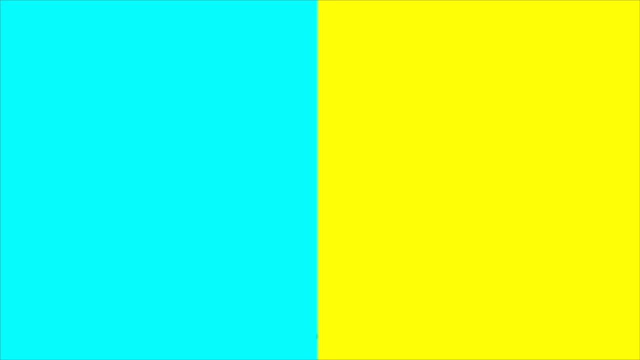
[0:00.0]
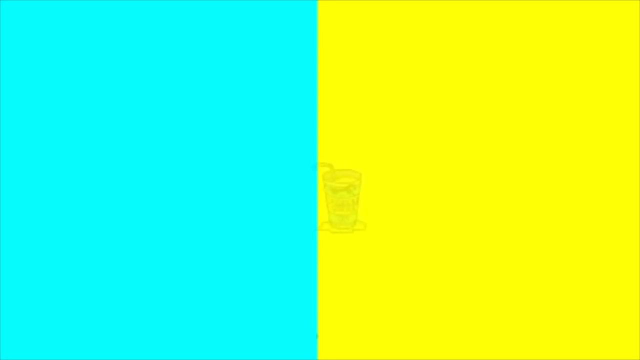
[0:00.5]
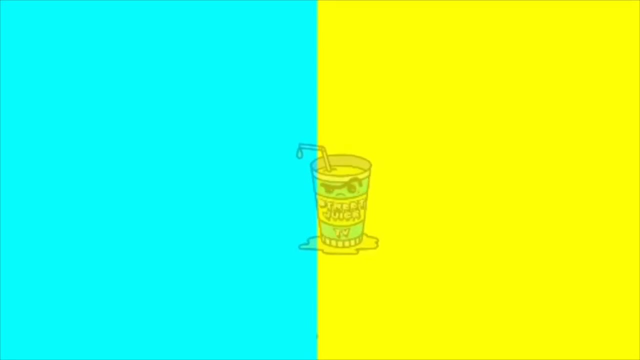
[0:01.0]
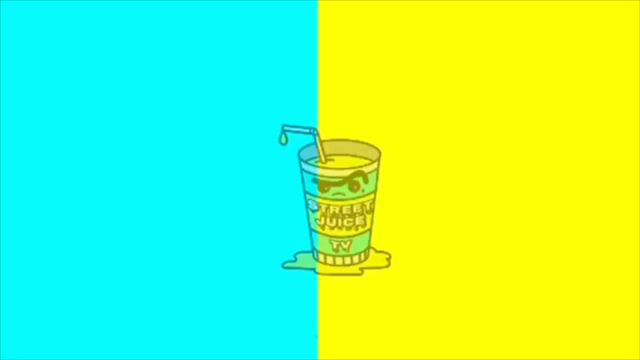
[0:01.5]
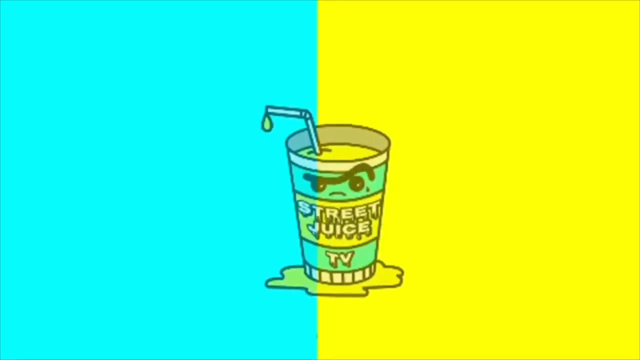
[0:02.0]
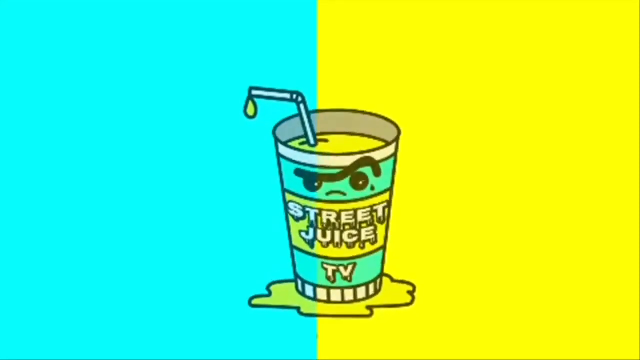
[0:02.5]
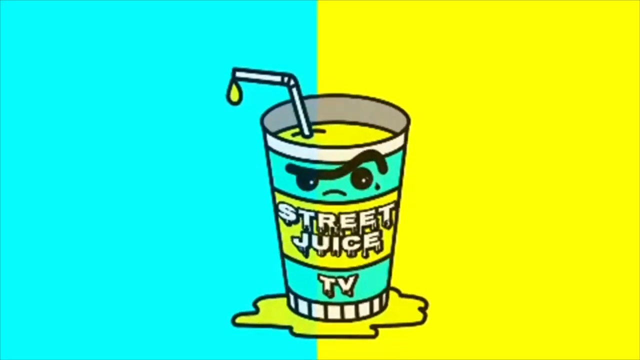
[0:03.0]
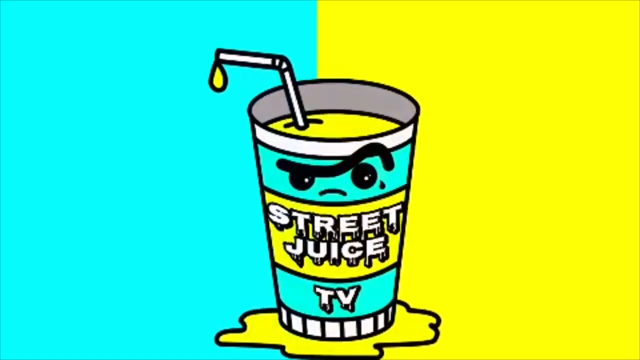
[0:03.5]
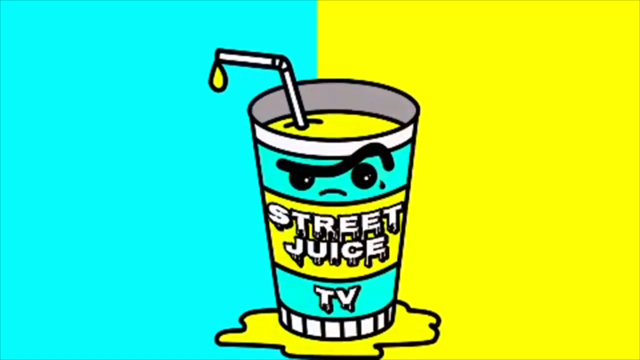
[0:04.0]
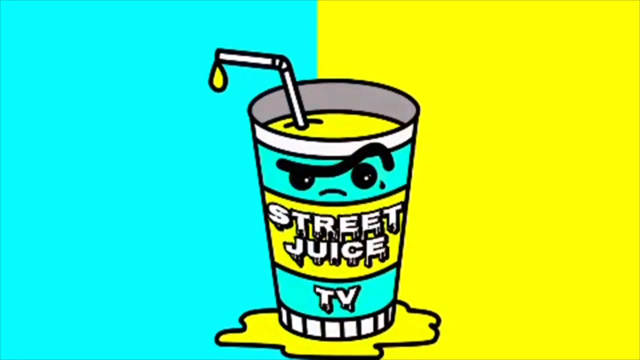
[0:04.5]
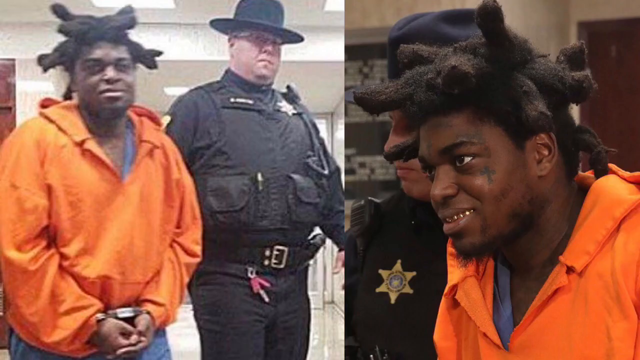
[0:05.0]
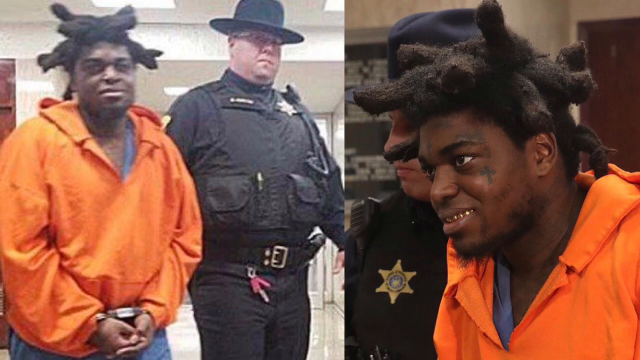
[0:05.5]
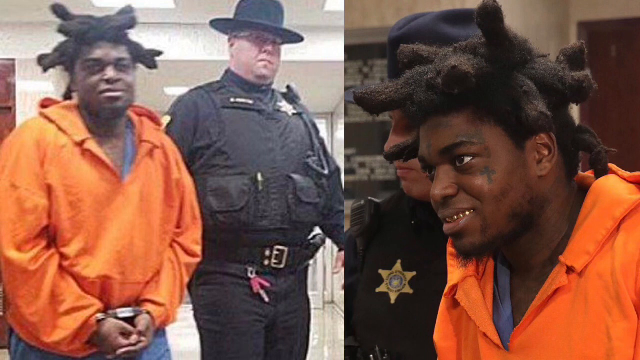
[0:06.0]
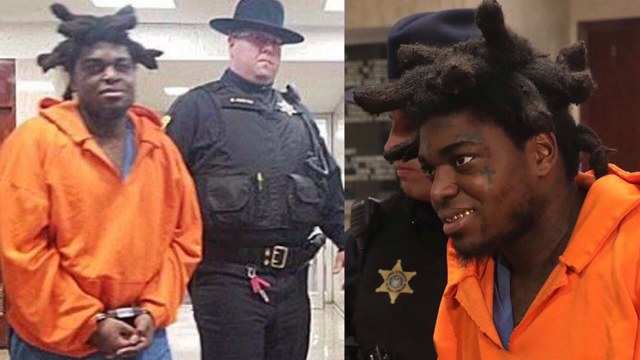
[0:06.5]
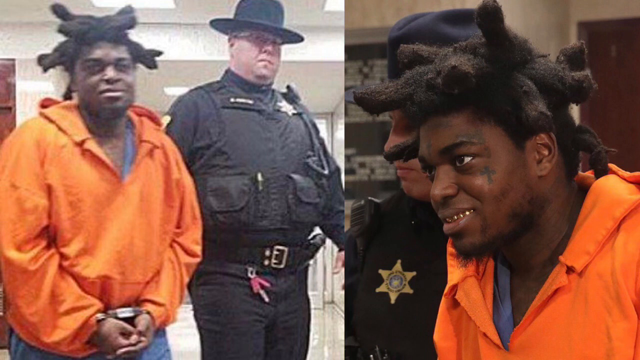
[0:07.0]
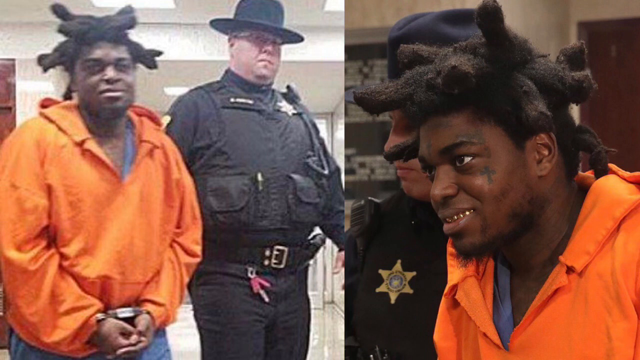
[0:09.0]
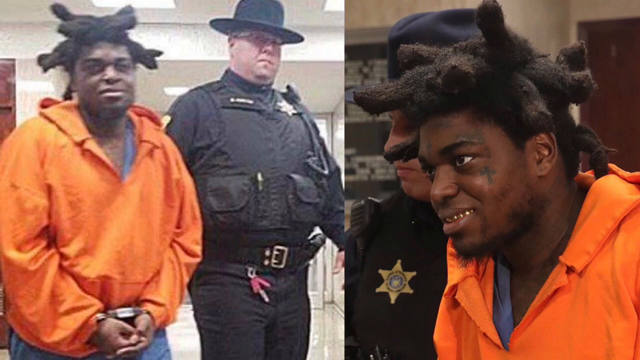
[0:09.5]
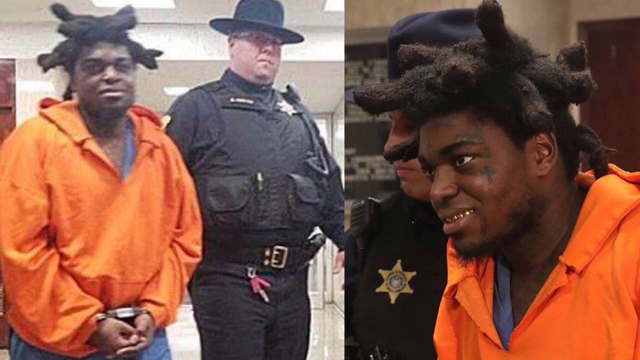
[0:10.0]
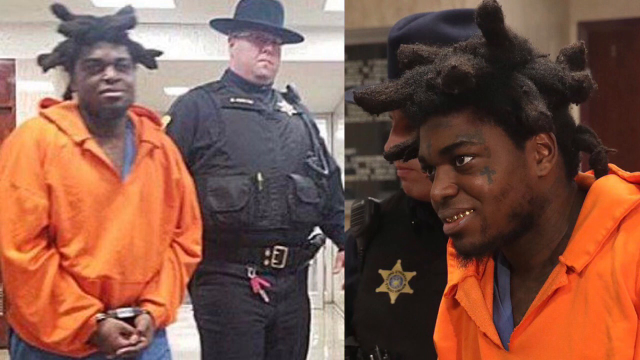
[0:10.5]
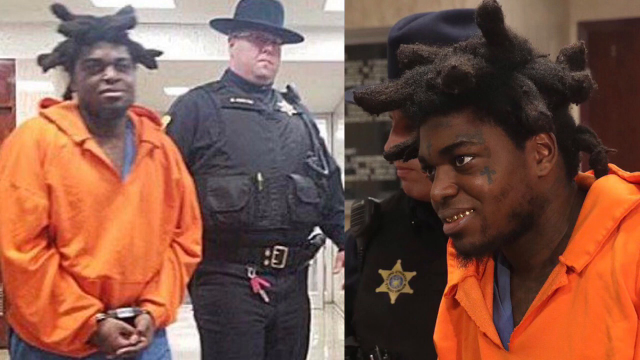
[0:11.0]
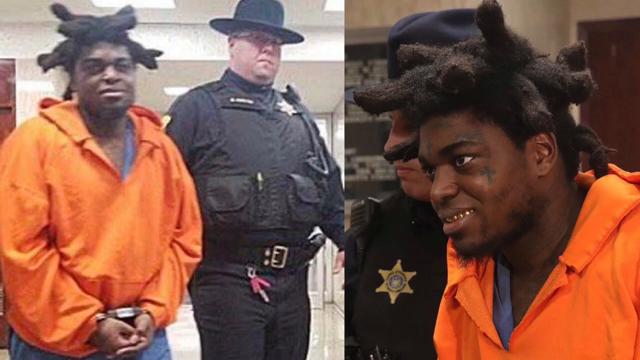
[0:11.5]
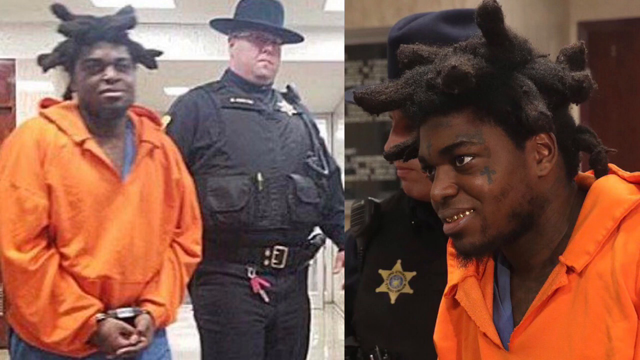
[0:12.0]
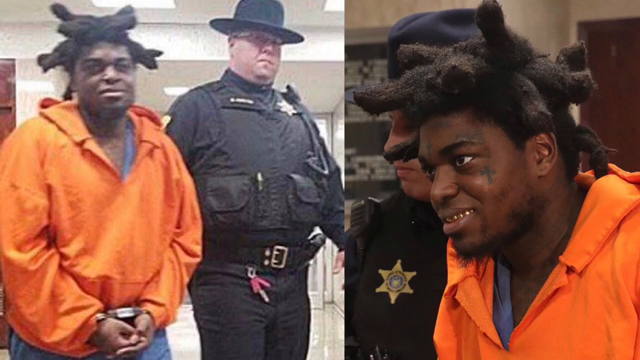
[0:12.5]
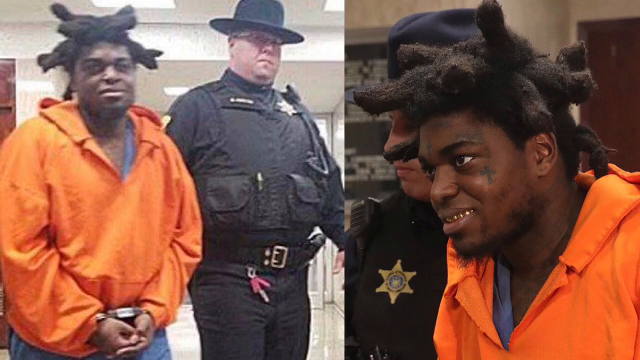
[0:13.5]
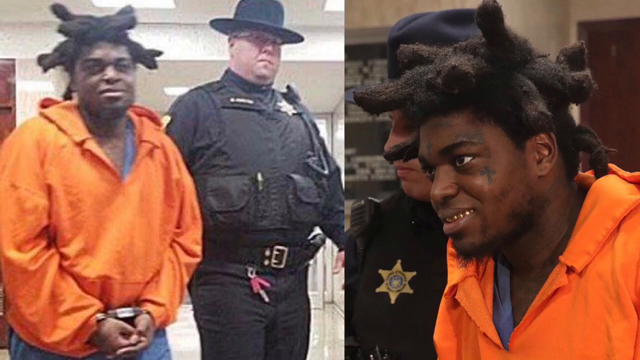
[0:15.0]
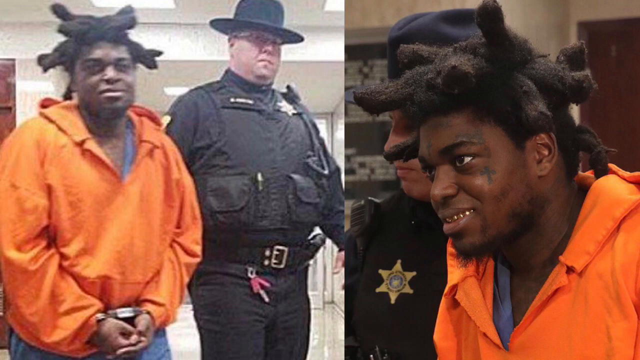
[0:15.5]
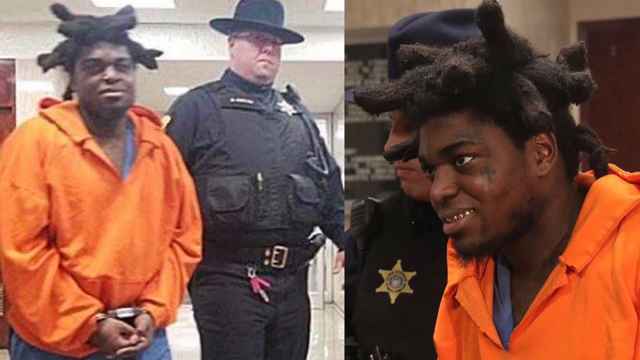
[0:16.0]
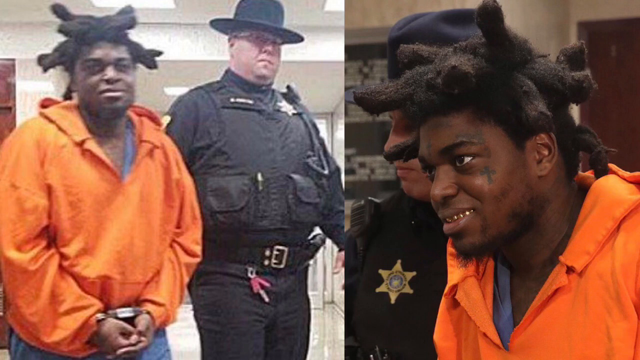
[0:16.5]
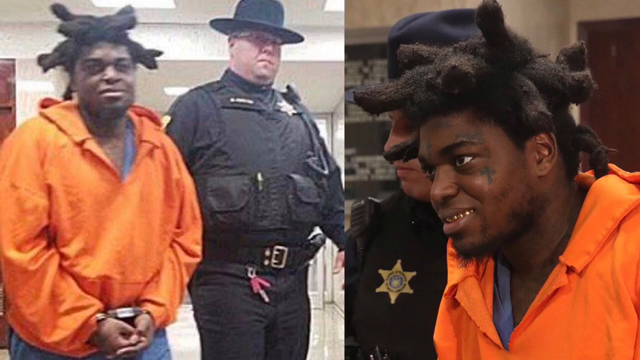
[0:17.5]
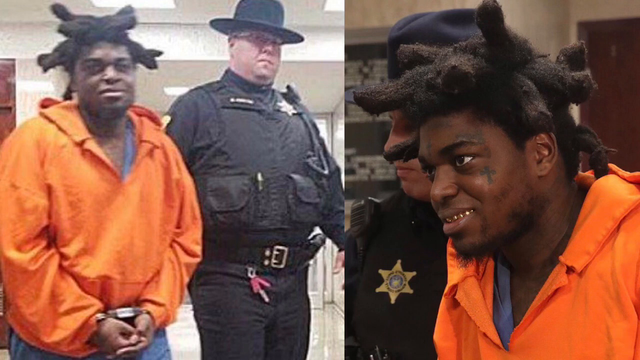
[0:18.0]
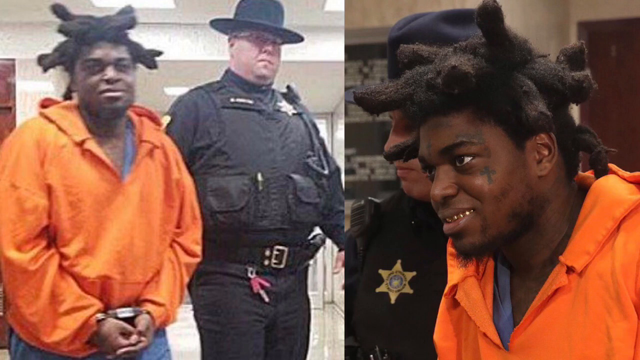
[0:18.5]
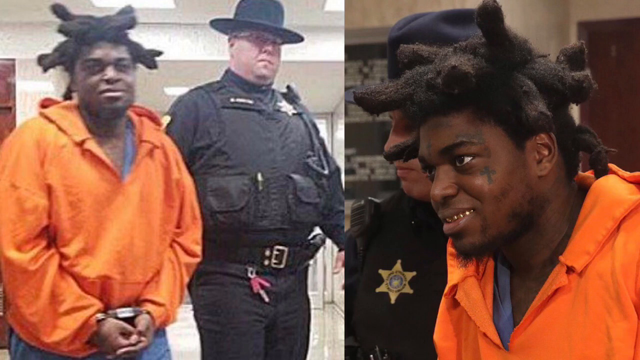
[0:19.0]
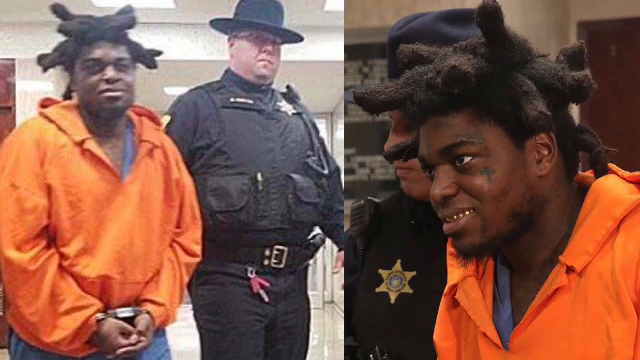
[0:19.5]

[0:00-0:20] Half the screen is solid light blue and the right half is solid yellow. After a few moments, a cartoon of what looks like a cup of juice fades in and zooms in to the center of the screen until it is quite large and prominent in the middle. It uses the same blue and yellow colors and says "Street Juice TV"; a face with something like a furrowed brow is drawn on the top, and a straw has something like a yellow droplet dripping off its top. The video then transitions to a split screen: on the left is a man in an orange prison suit of some kind, next to what looks like some kind of police officer with a black top hat. On the right is another close-up of the criminal sitting and looking off to the left while another police officer is sitting to his left.